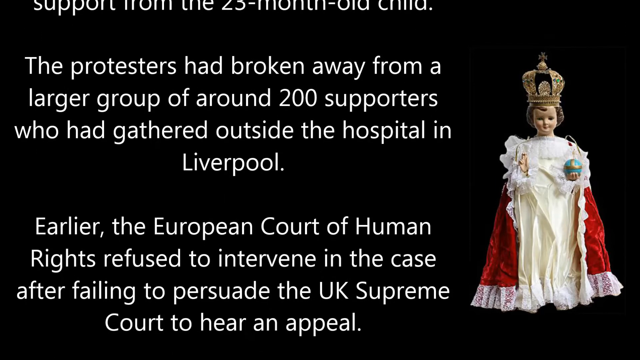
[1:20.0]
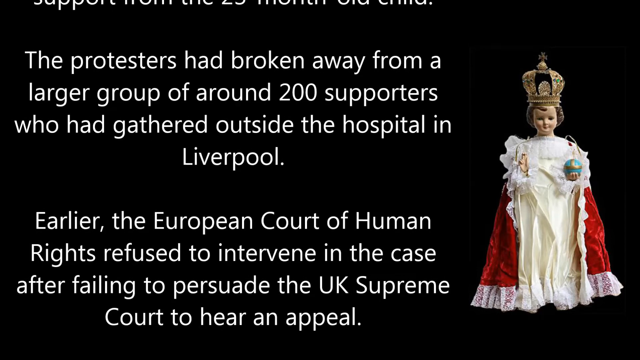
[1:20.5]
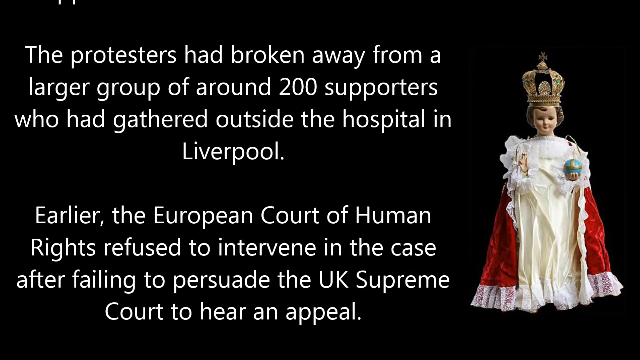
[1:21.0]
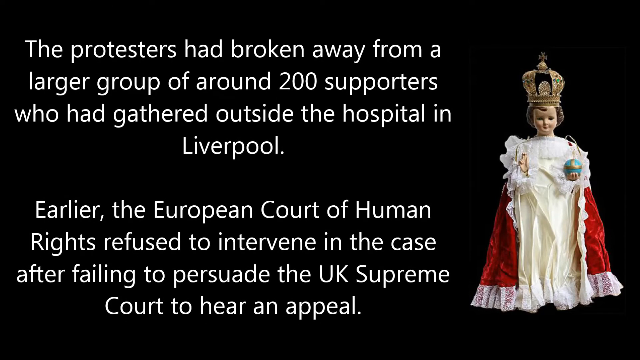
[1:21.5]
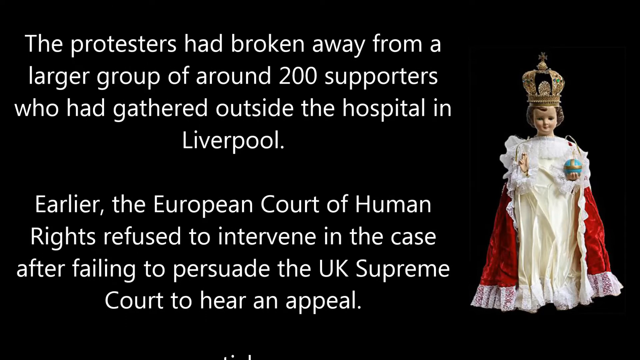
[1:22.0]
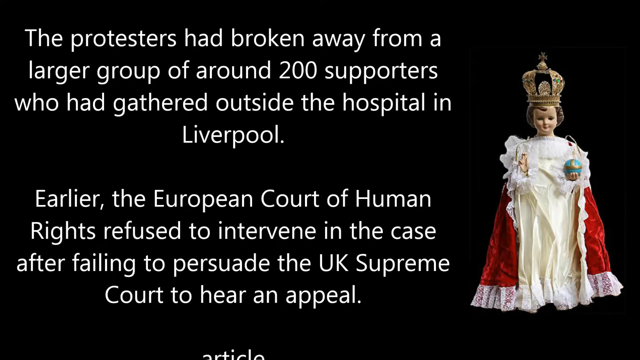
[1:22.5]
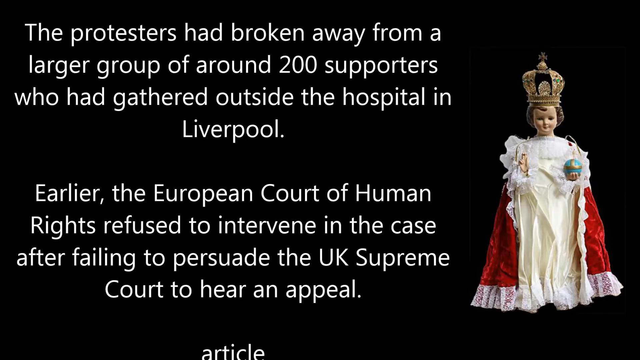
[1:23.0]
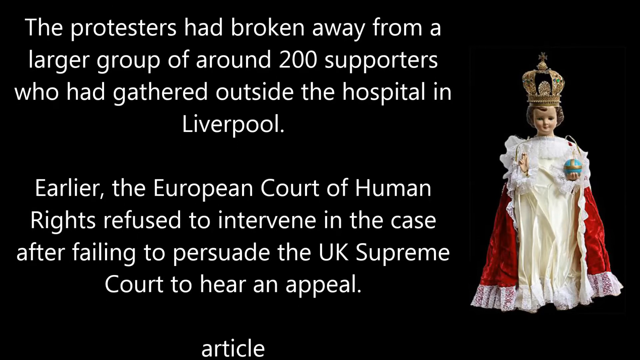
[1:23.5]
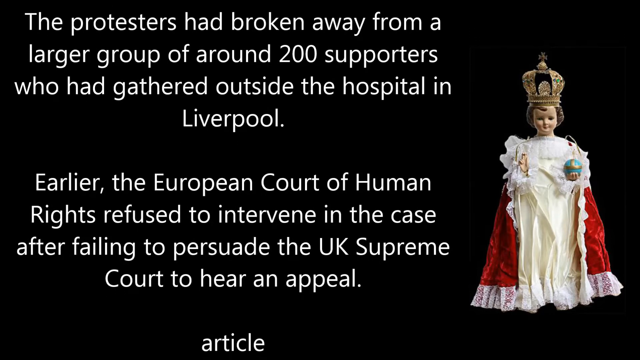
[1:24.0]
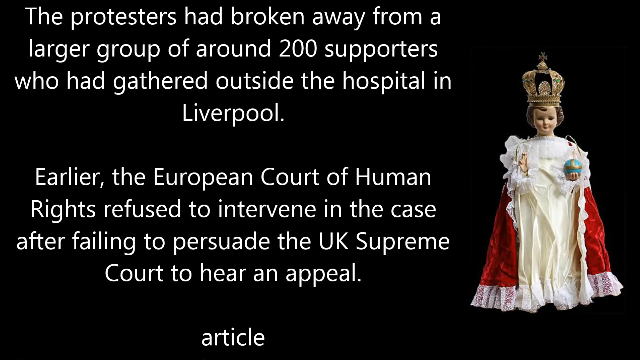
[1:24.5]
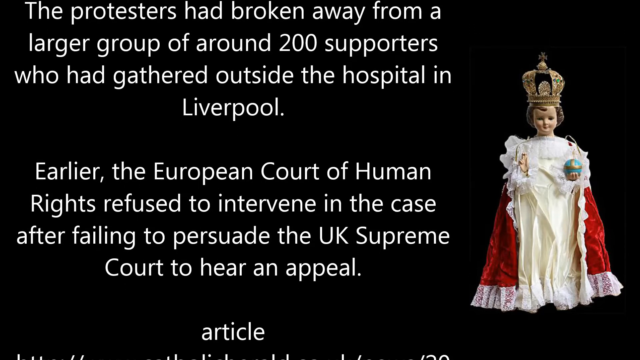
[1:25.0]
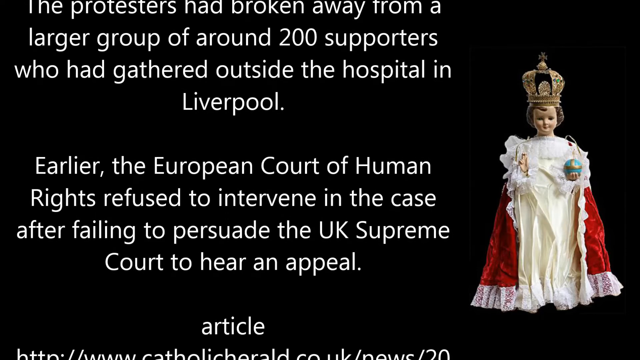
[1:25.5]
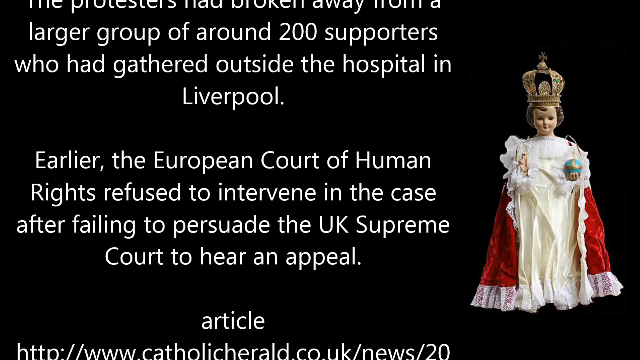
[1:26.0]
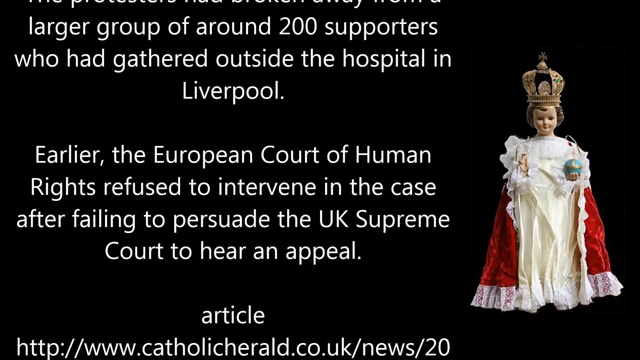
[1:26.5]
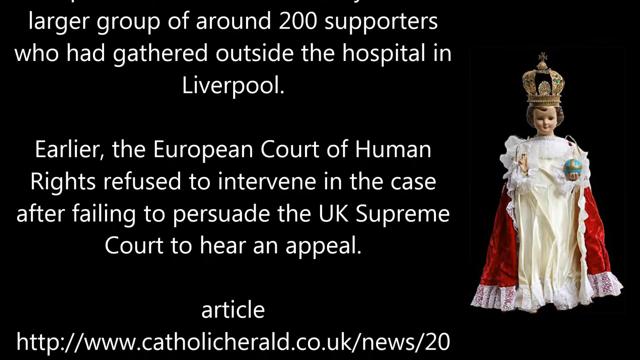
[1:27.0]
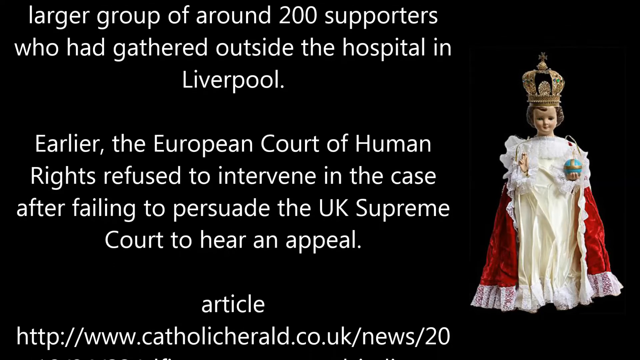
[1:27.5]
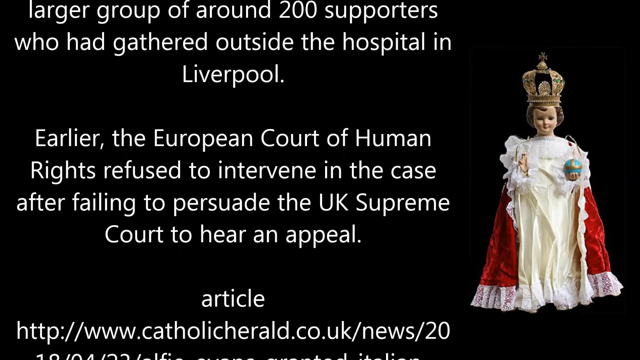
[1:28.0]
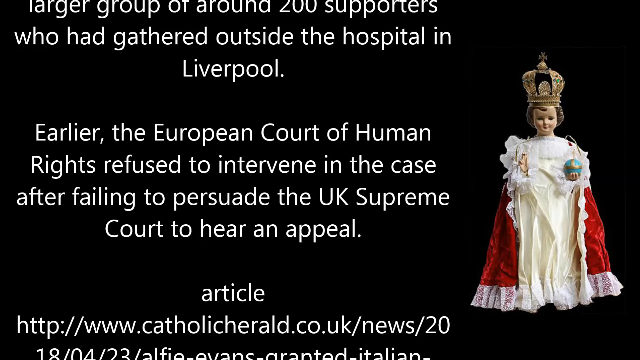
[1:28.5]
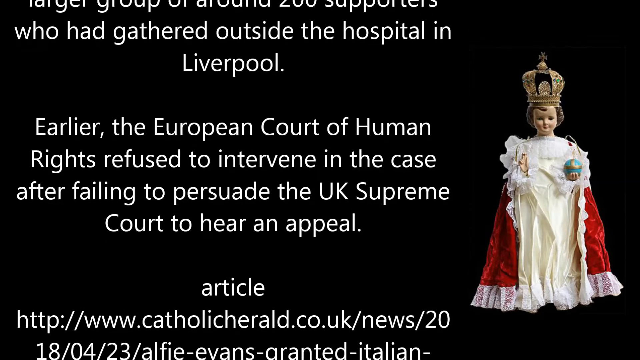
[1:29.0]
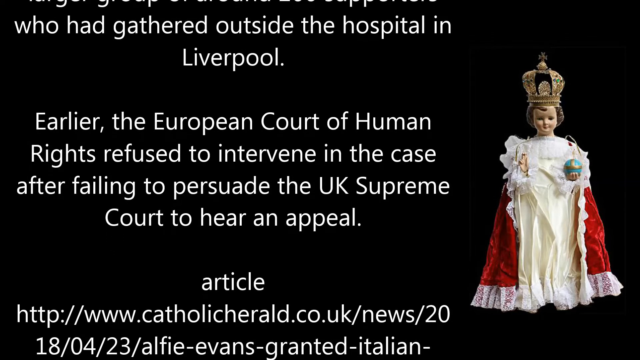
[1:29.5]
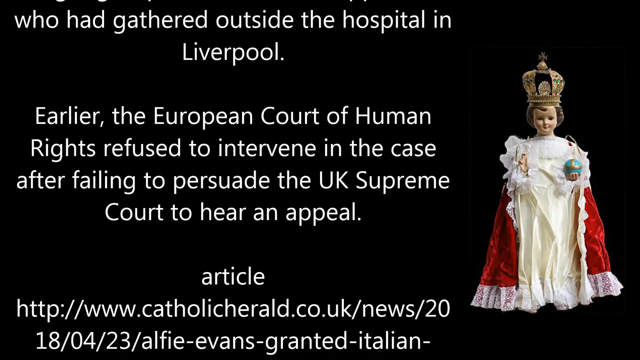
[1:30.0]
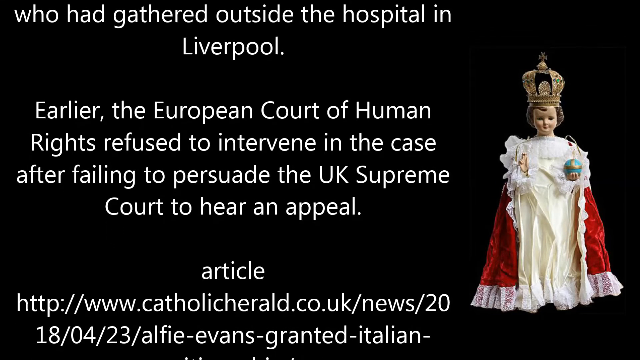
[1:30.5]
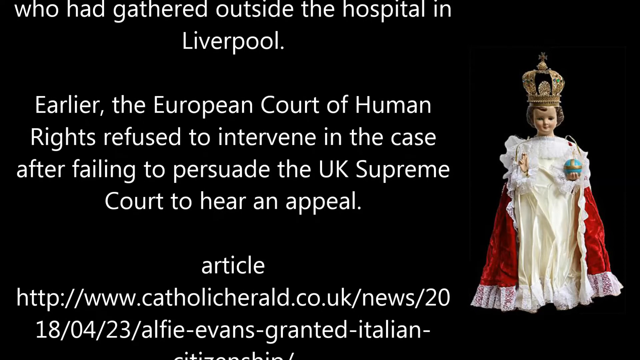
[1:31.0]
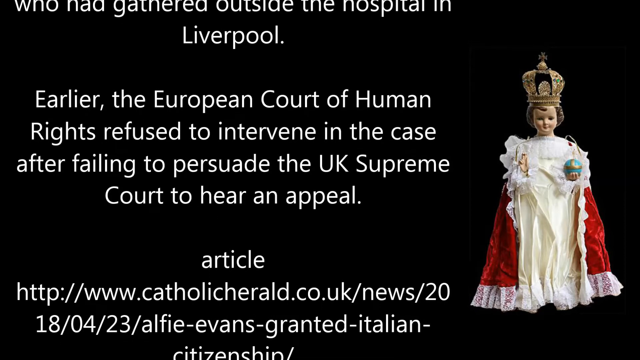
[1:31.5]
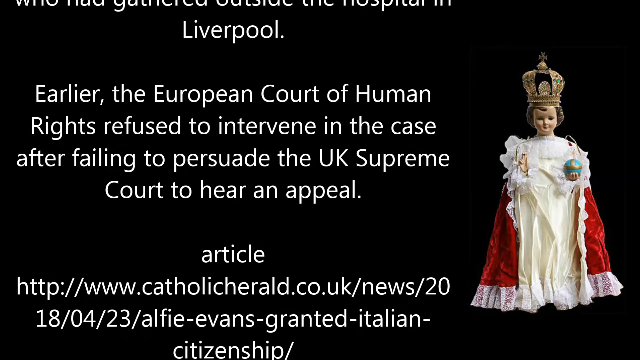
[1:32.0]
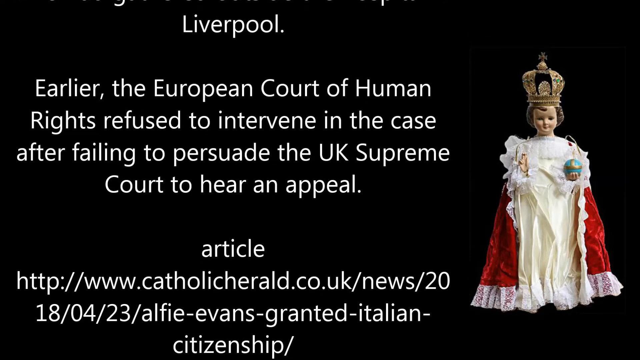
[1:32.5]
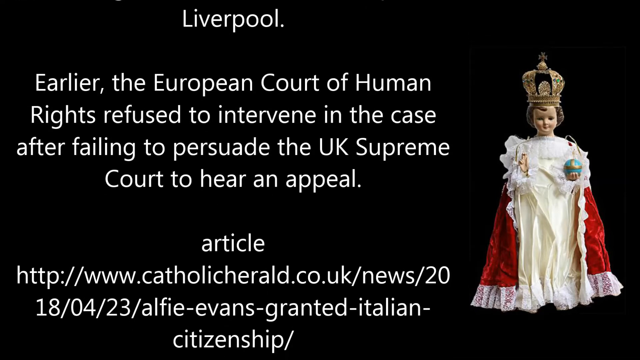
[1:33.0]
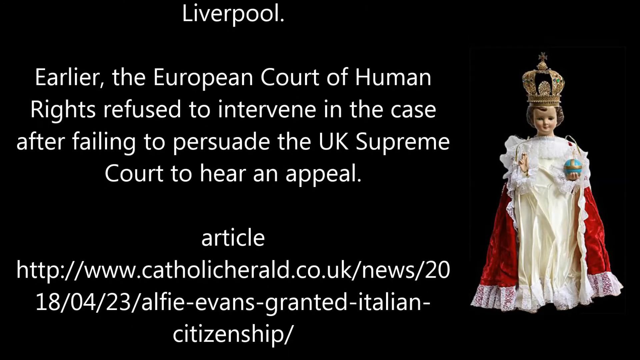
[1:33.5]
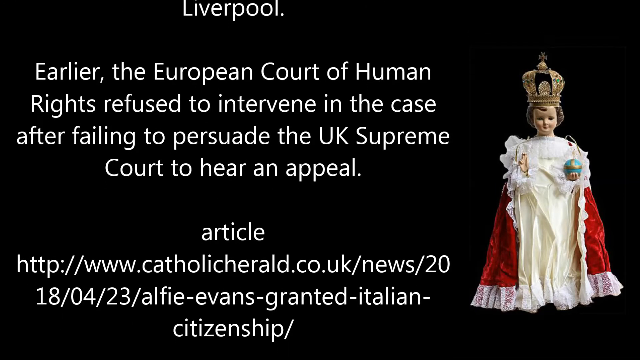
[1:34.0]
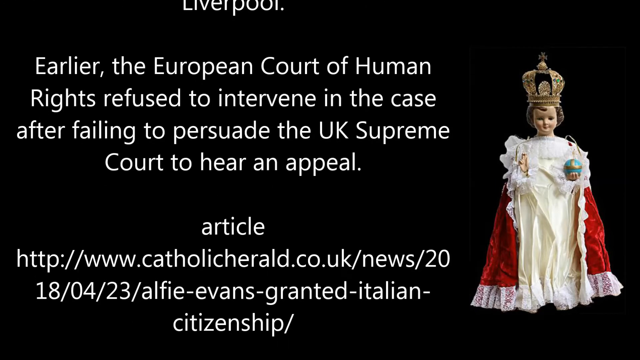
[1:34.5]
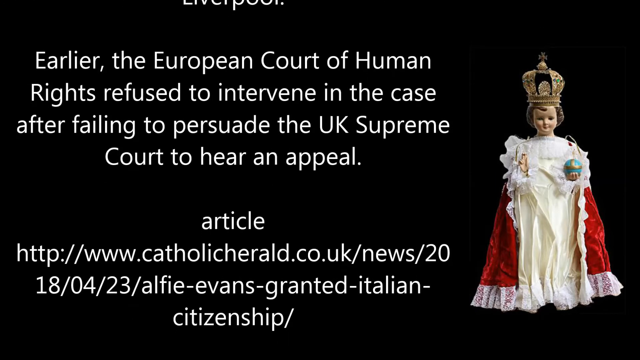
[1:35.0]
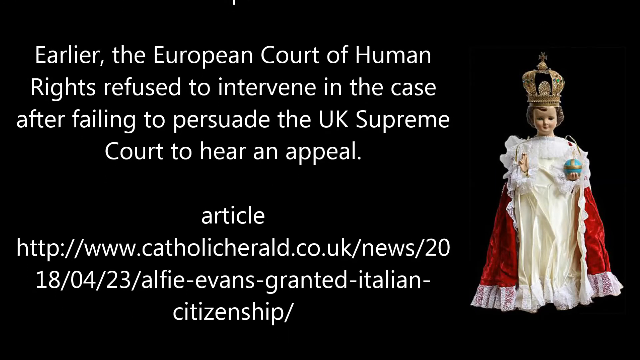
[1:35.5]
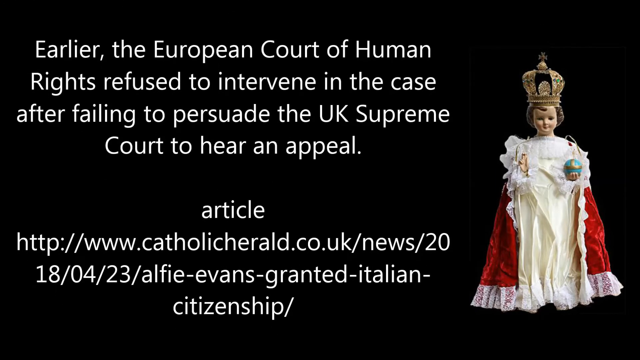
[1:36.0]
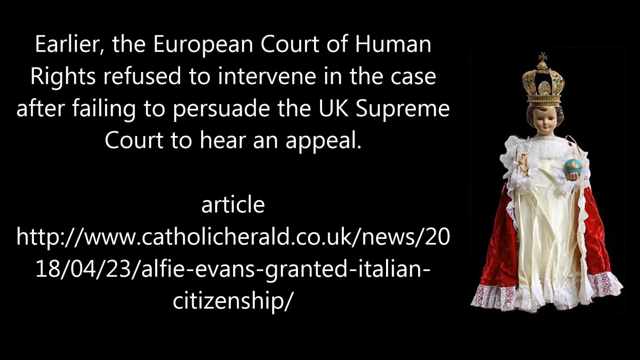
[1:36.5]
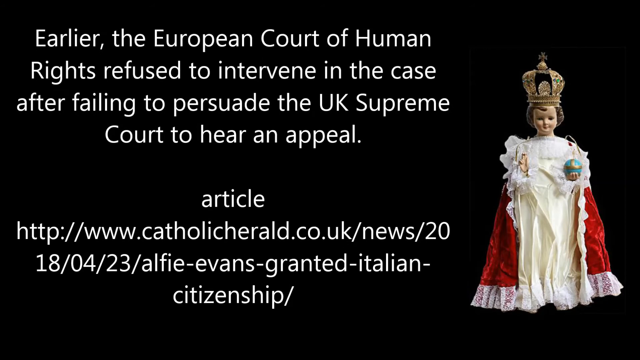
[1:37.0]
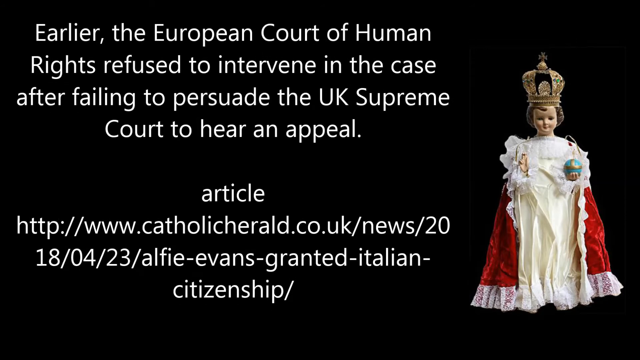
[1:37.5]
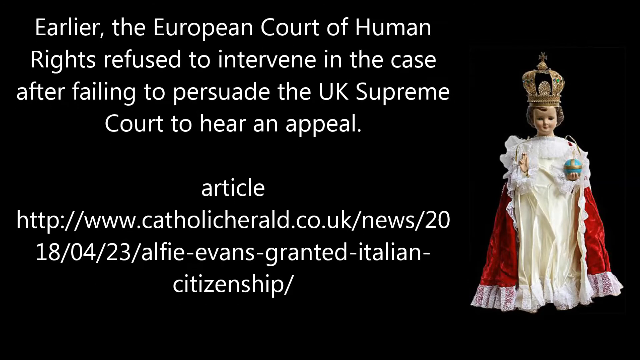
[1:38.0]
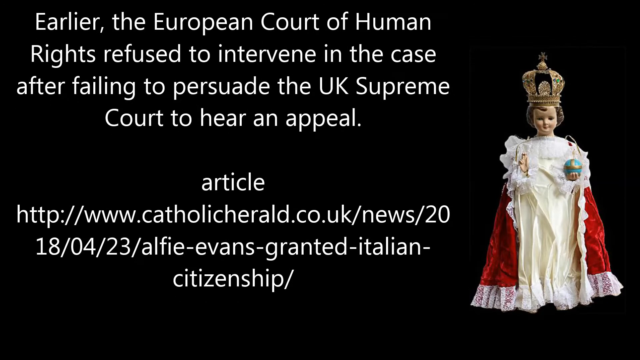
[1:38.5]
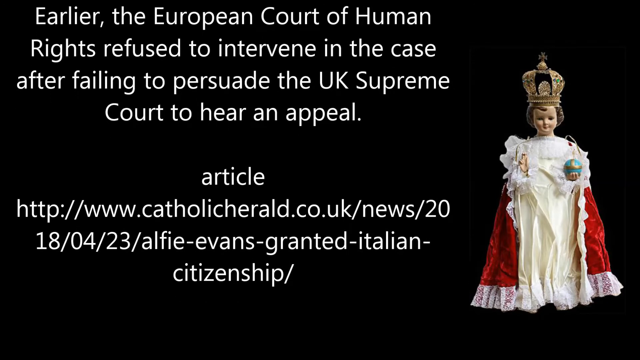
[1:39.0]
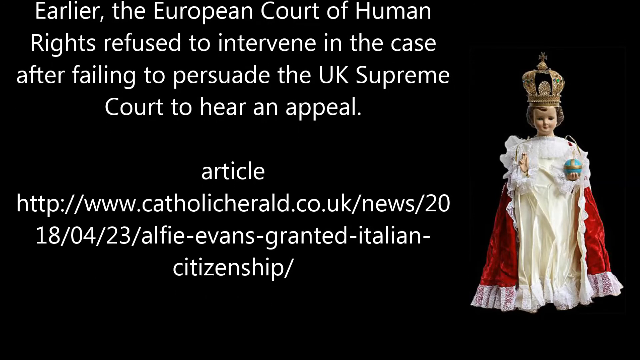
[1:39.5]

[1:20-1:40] Separate paragraphs of white text scroll upward on a black background, with a doll in a king's robe or queen's dress to the right of the text. The first paragraph reads "The protesters had broken away from a larger group of around 200 supporters who had gathered outside the hospital in Liverpool." The font continues to scroll upward, and the next paragraph reads "Earlier the European Court of Human Rights refused to intervene in the case after failing to persuade the UK Supreme Court to hear an appeal." Following that text is the word "article" and then a link to the article the paragraphs refer to: "http://www.catholicherald.co.uk". As the URL is displayed at the bottom of the screen, the scene fades to black.